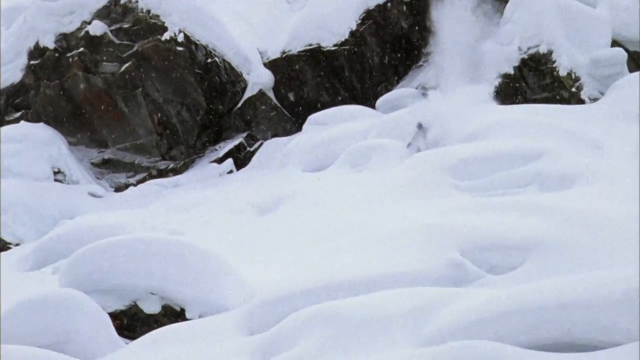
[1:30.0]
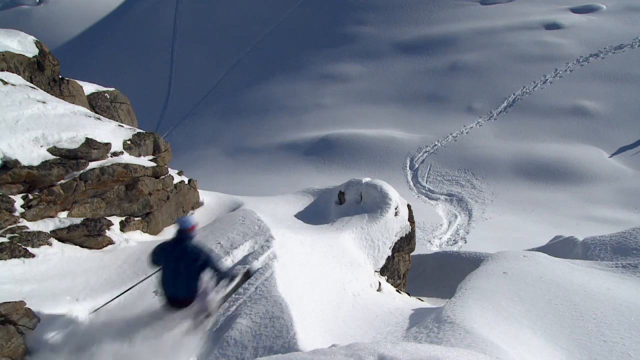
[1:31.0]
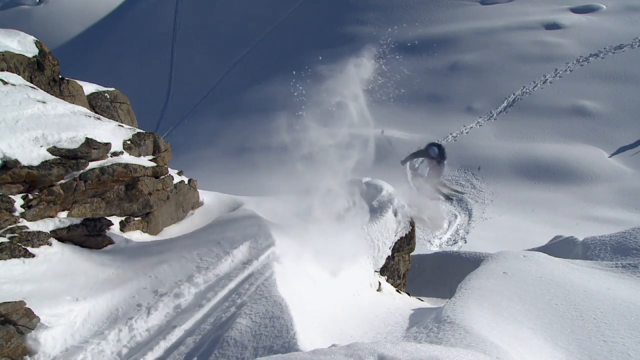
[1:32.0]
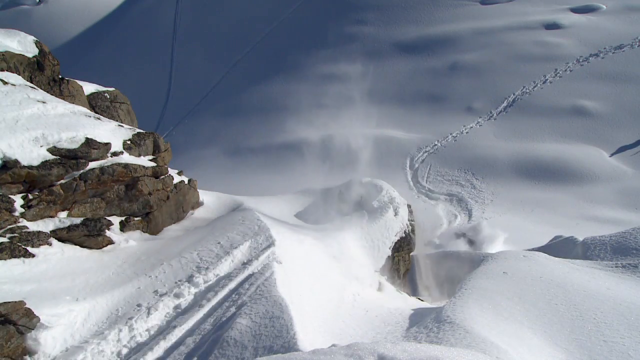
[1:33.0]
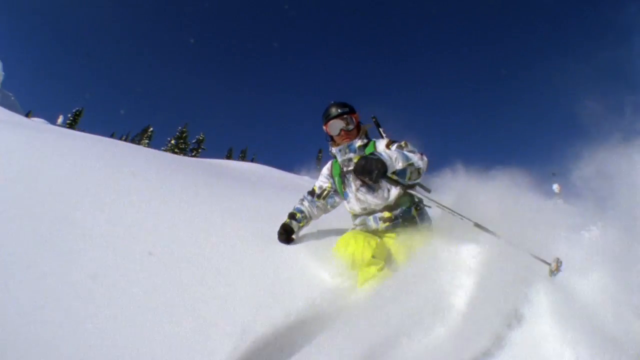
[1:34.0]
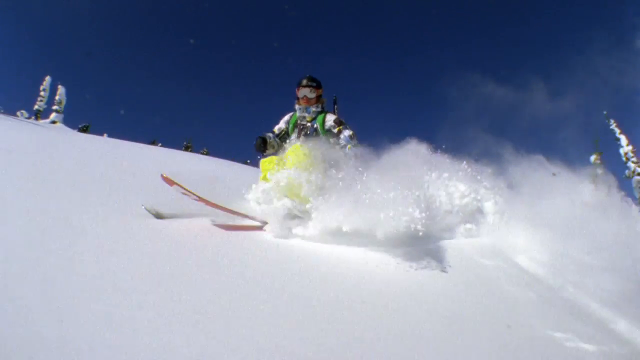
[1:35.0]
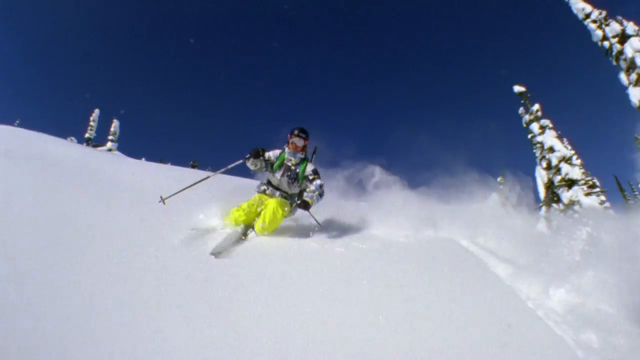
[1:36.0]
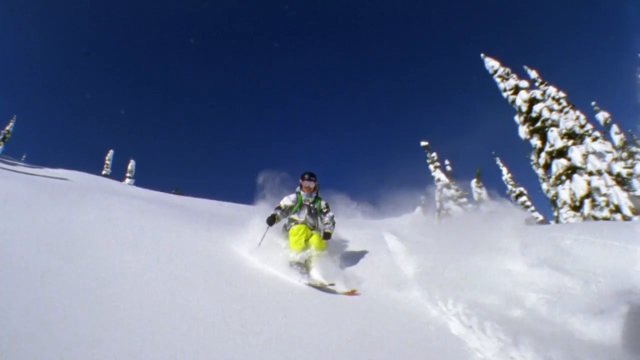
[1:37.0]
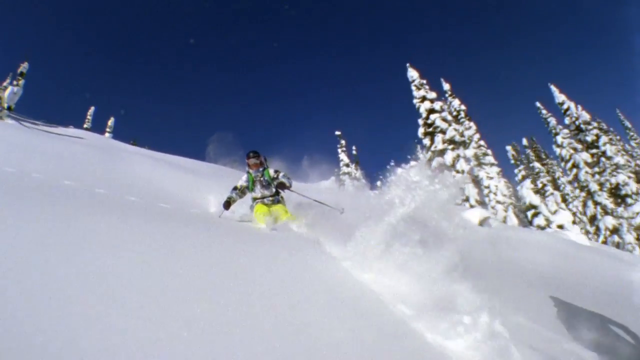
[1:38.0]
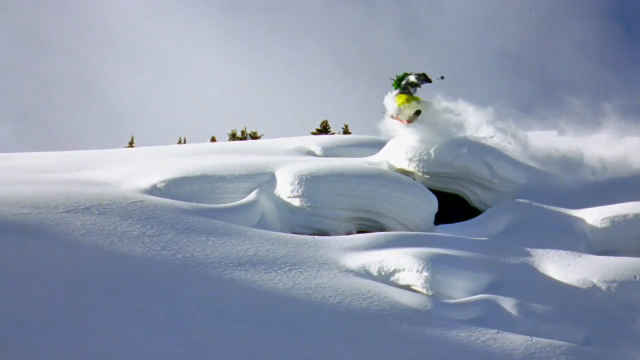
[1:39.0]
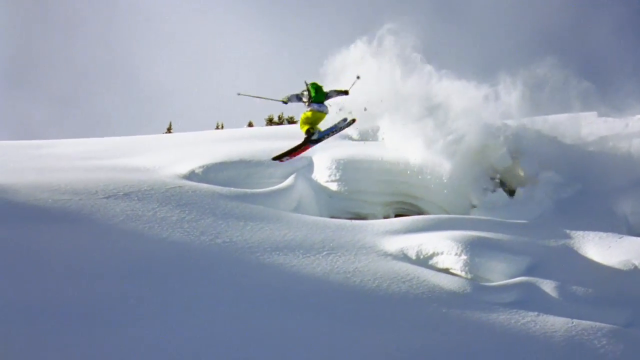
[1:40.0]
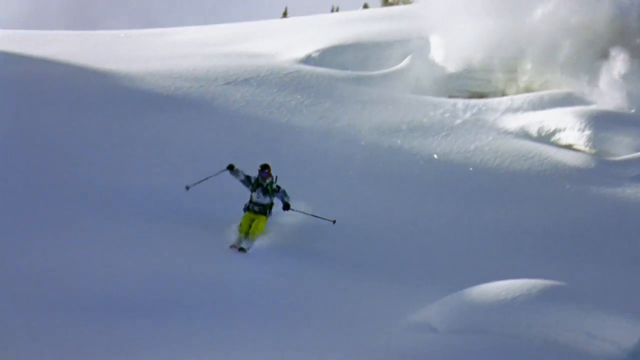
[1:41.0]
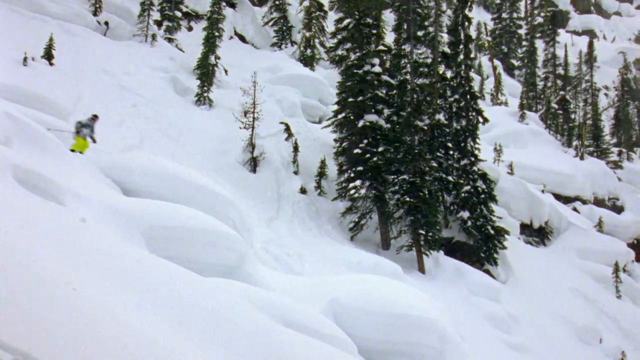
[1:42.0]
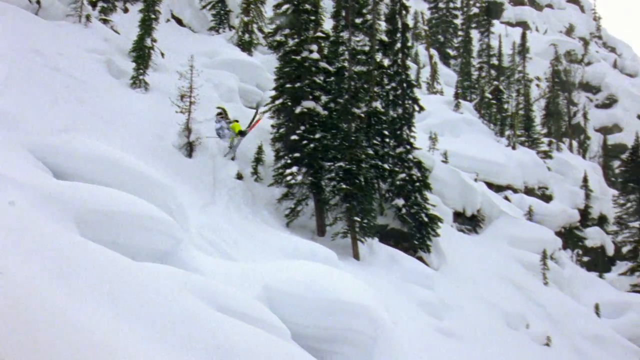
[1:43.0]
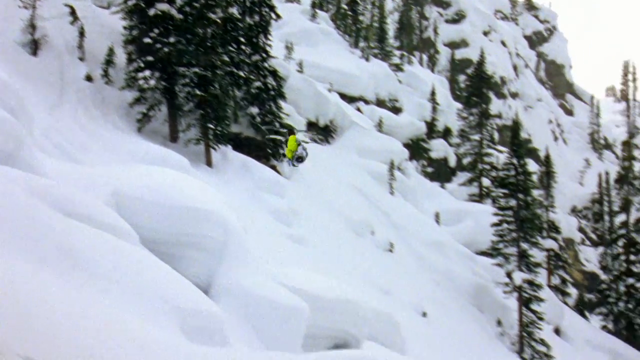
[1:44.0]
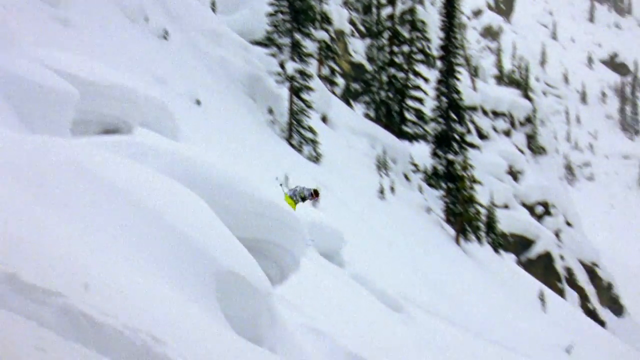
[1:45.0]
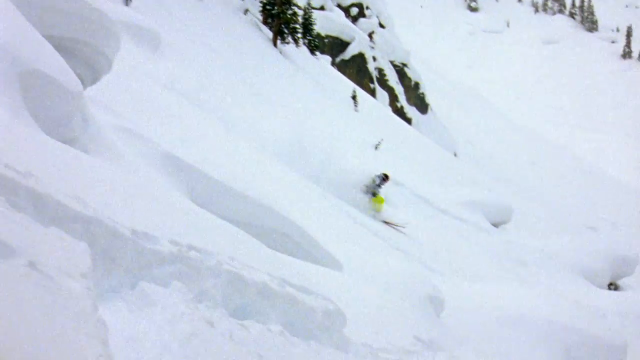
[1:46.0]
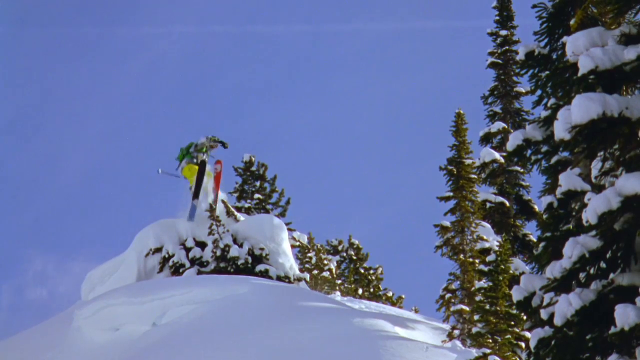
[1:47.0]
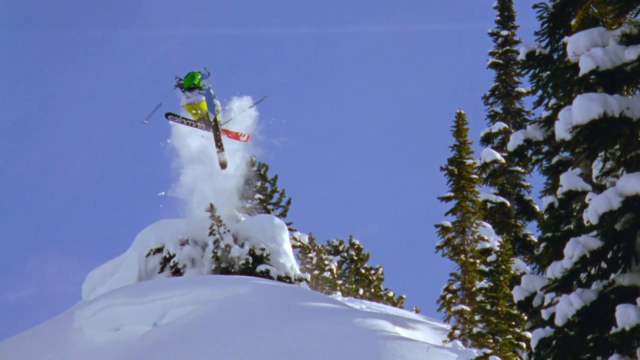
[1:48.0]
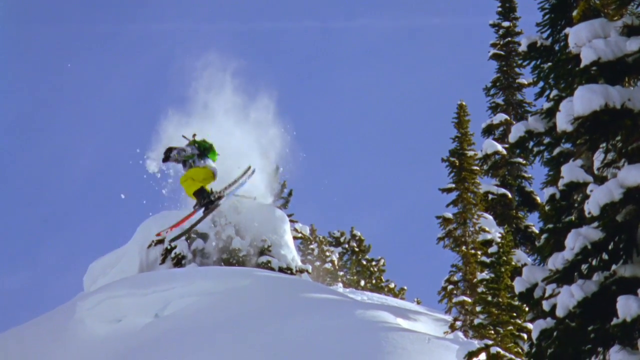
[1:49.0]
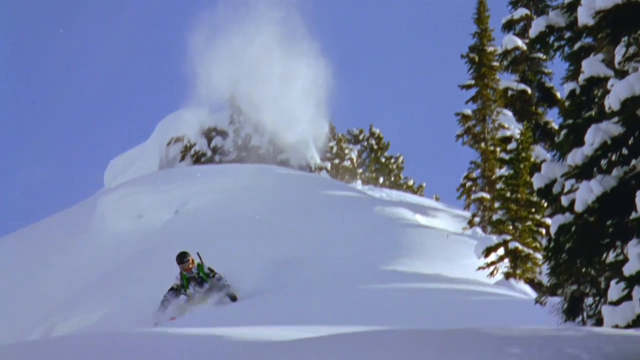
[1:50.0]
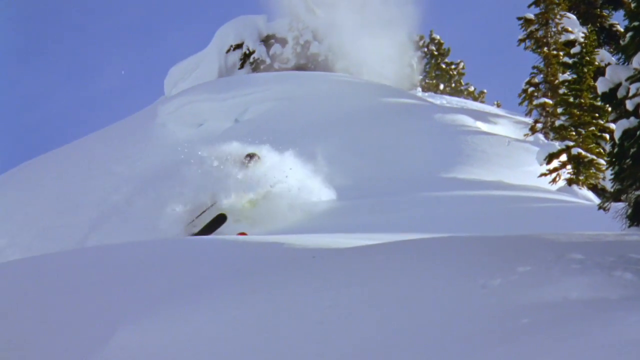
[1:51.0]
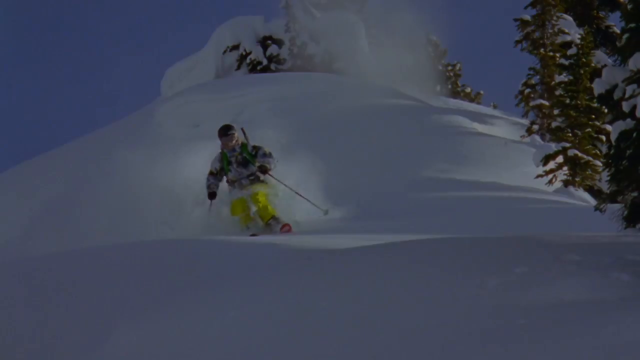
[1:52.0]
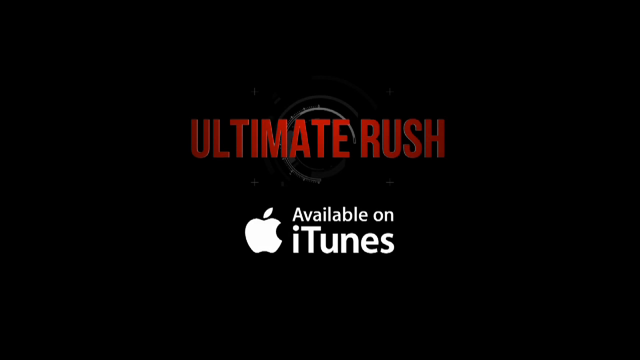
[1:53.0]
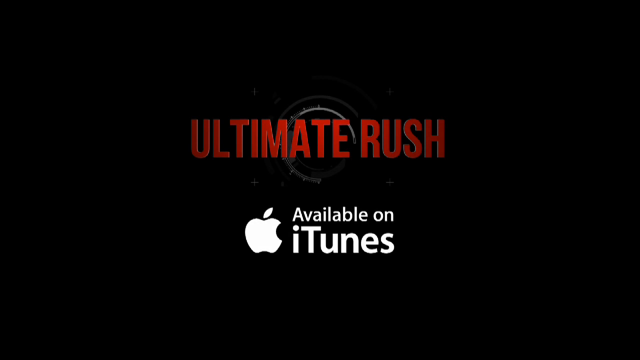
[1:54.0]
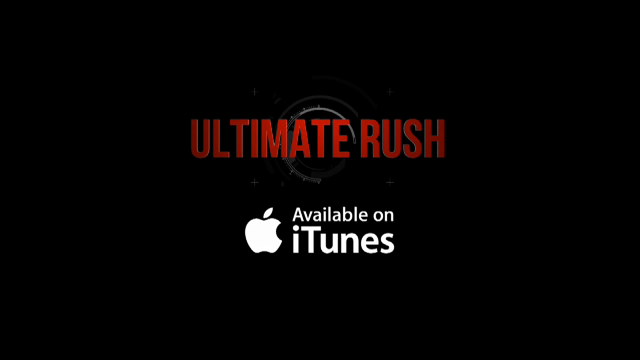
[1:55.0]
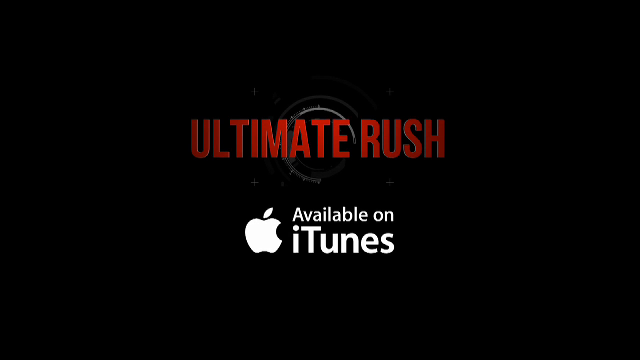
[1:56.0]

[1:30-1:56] A skier has just landed from a jump, and only a ski is visible sticking out of the snow. Next, another skier jumps off a cliff from left to right, with the camera facing down in something like an aerial view; he does a 360 by turning his body to the left and comes back the other way as he lands. Then one of the skiers goes down a hill in slow motion, with the camera seemingly going down the hill at about the same speed. The same skier then does another 360 spin counterclockwise while jumping off a cliff and lands, then does a backflip off a slope going from left to right; he wears neon green pants. Next he does a different 360 spin counterclockwise off a small rock and lands it. The video ends with the text "Ultimate Rush available on iTunes".